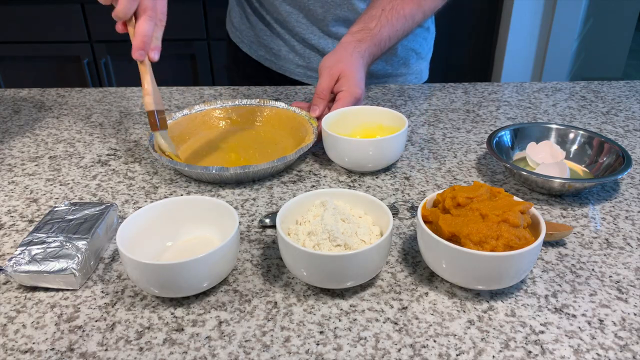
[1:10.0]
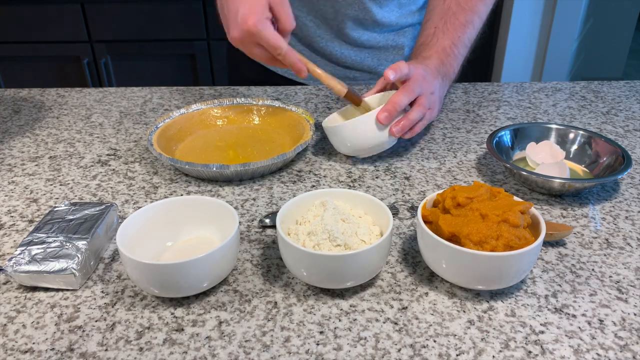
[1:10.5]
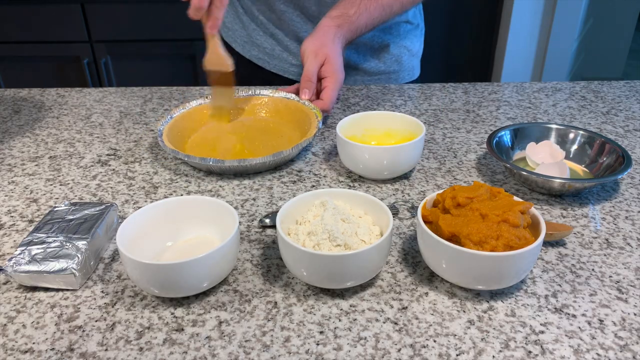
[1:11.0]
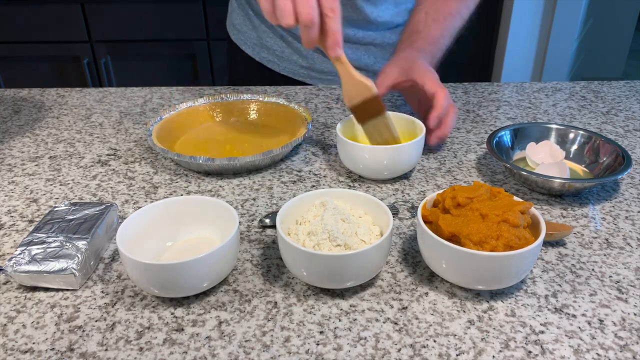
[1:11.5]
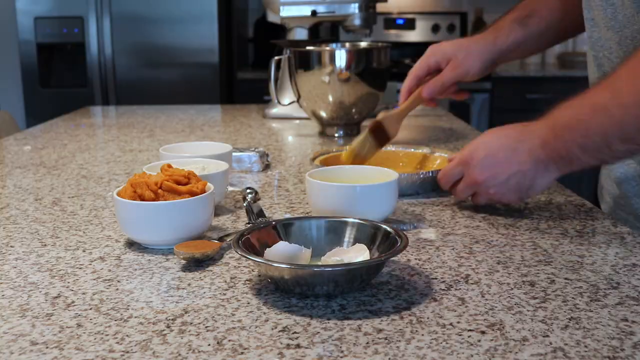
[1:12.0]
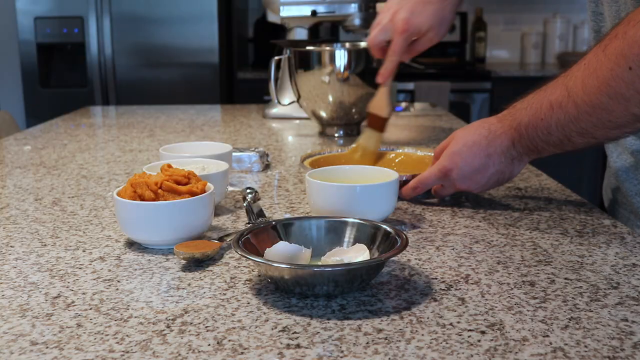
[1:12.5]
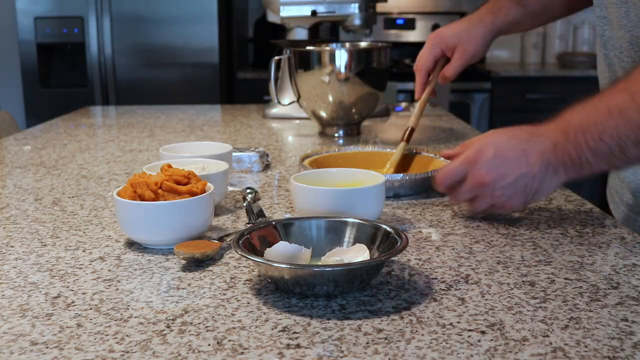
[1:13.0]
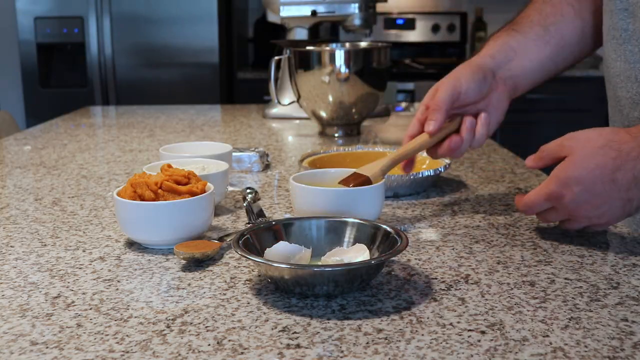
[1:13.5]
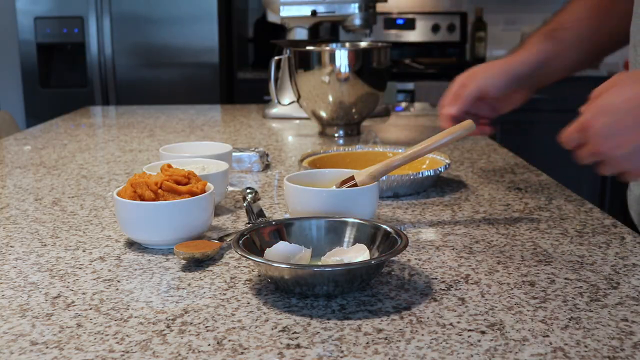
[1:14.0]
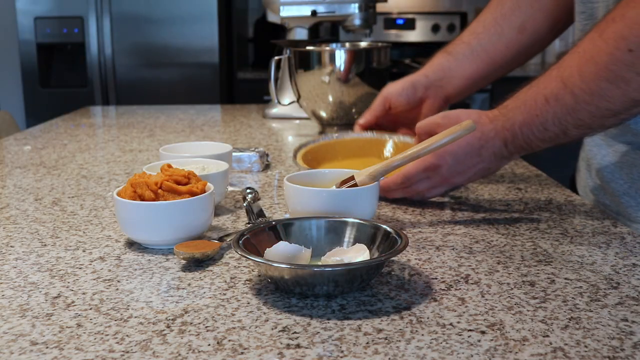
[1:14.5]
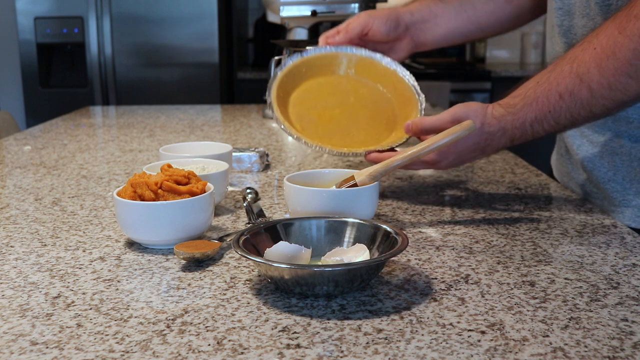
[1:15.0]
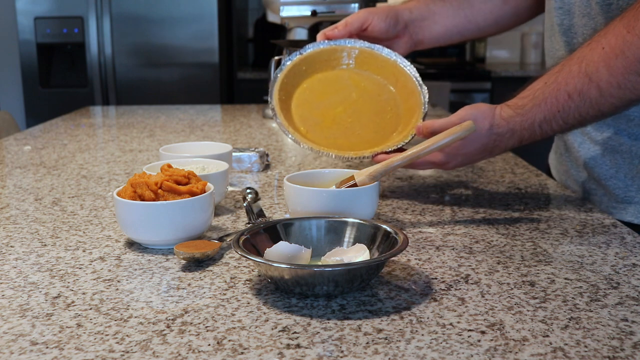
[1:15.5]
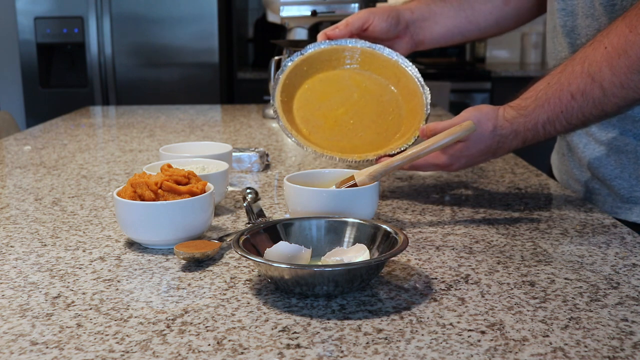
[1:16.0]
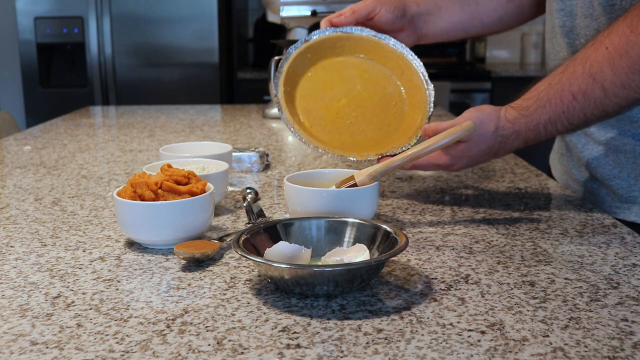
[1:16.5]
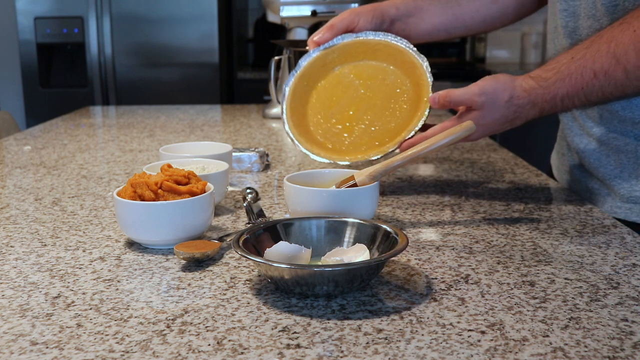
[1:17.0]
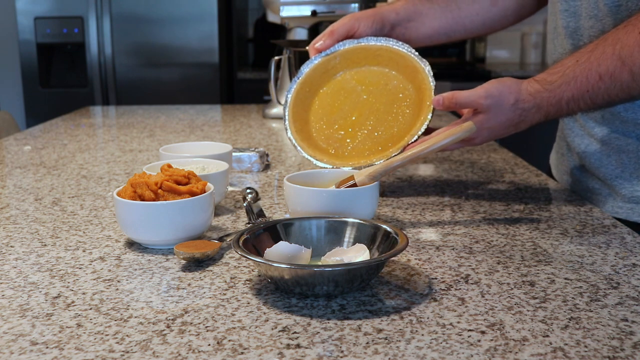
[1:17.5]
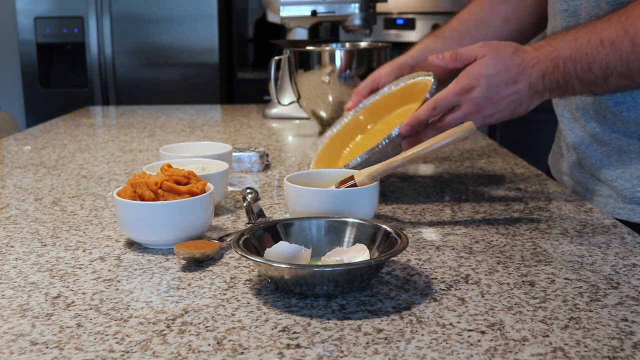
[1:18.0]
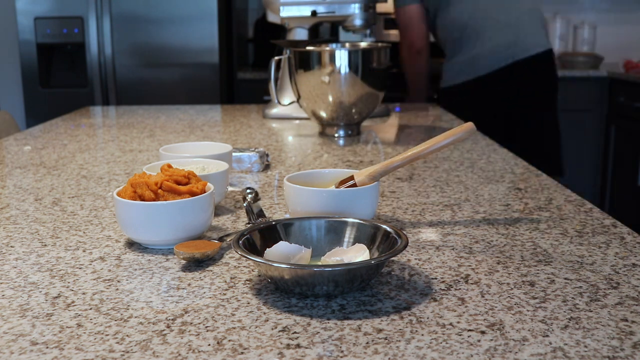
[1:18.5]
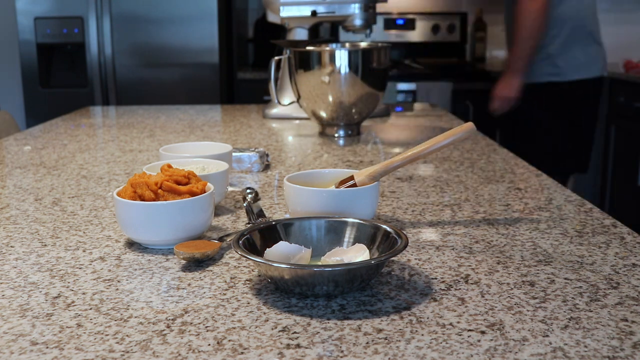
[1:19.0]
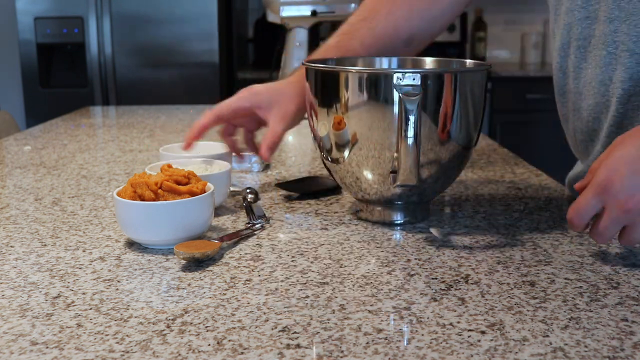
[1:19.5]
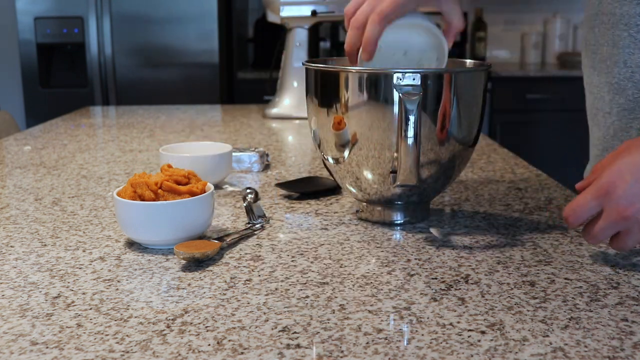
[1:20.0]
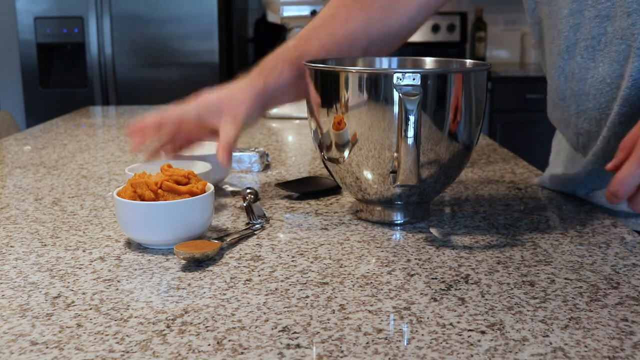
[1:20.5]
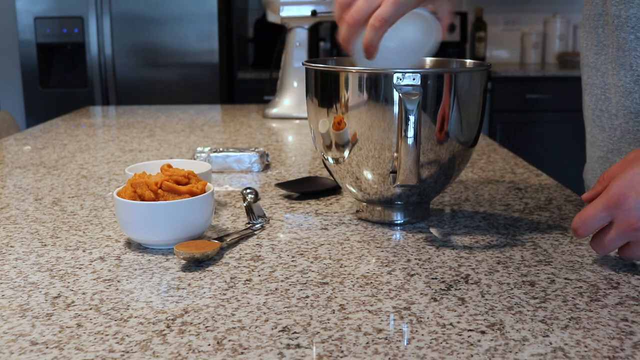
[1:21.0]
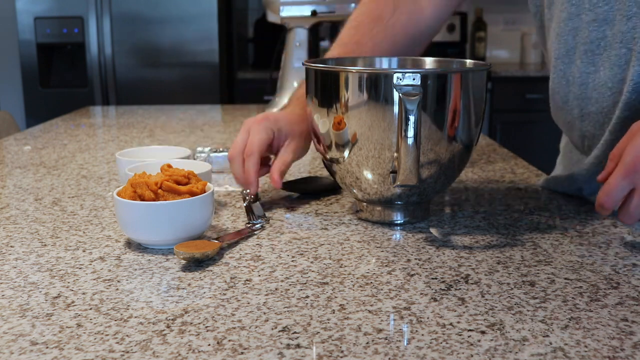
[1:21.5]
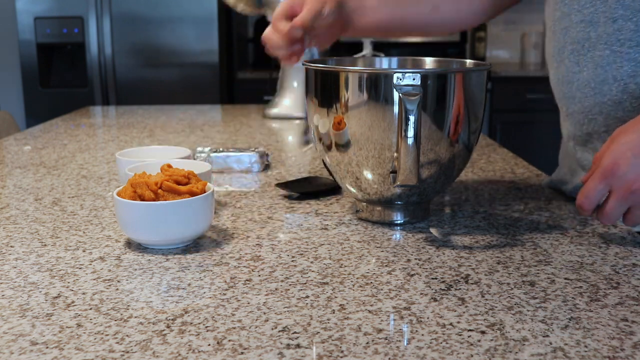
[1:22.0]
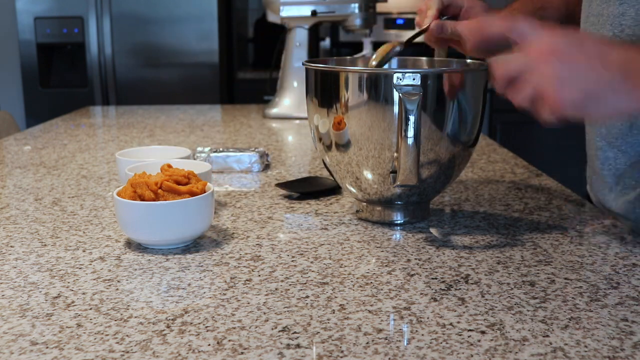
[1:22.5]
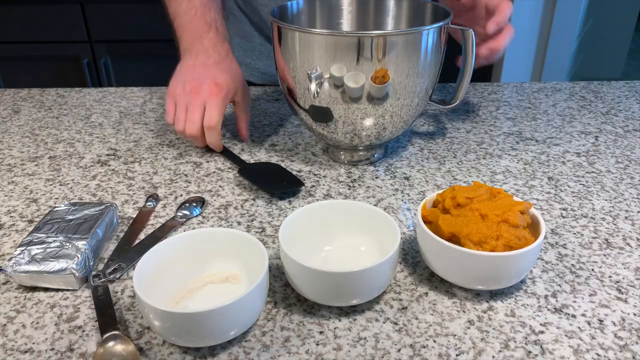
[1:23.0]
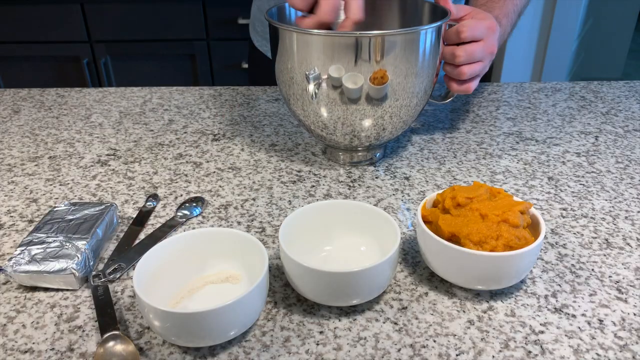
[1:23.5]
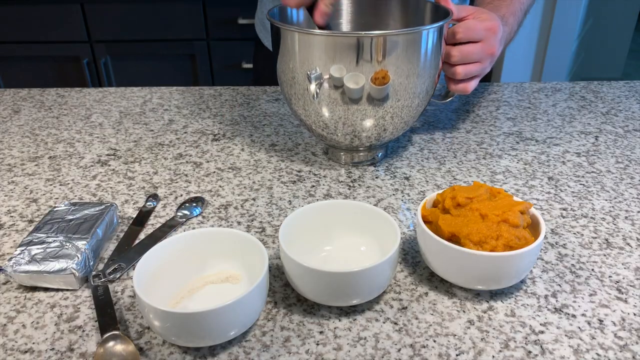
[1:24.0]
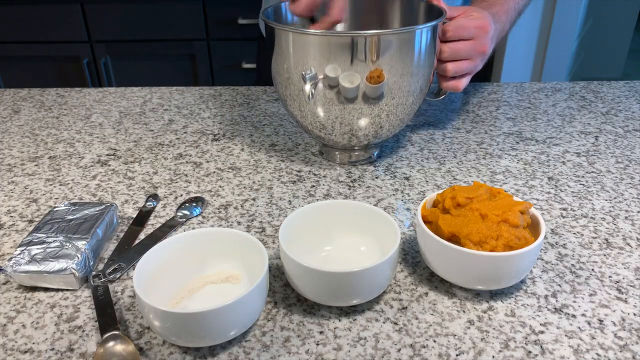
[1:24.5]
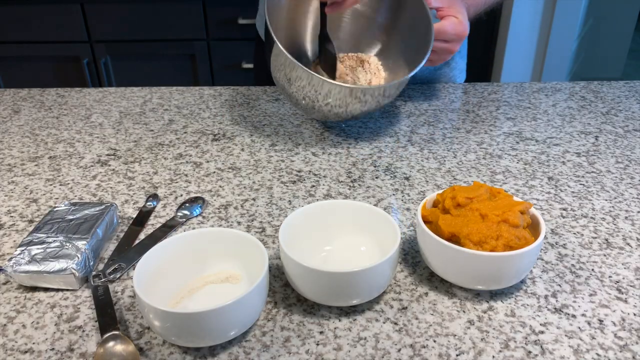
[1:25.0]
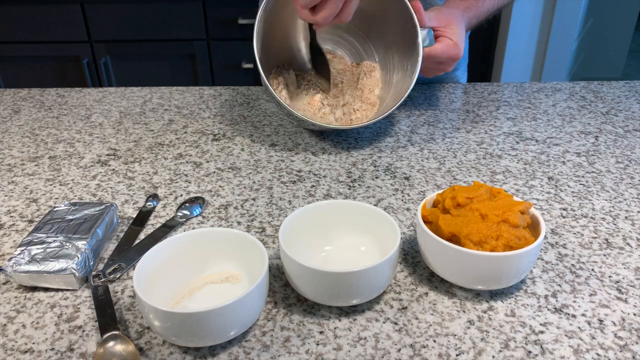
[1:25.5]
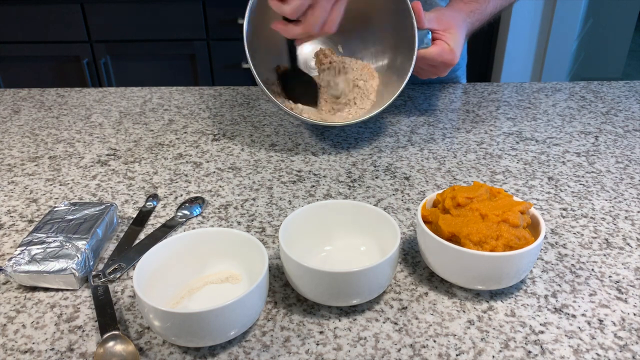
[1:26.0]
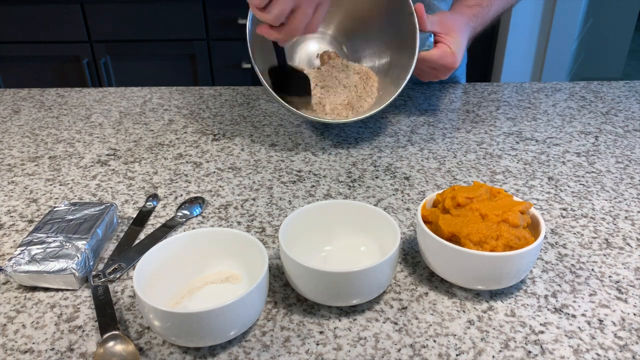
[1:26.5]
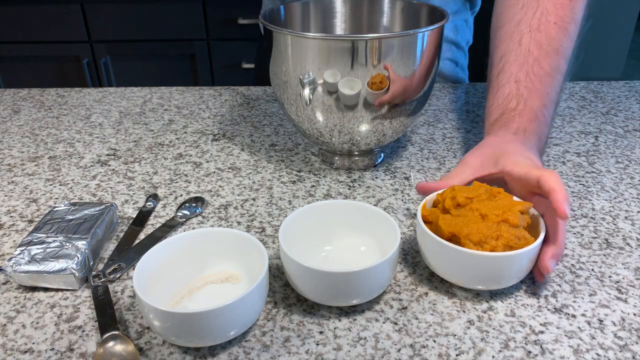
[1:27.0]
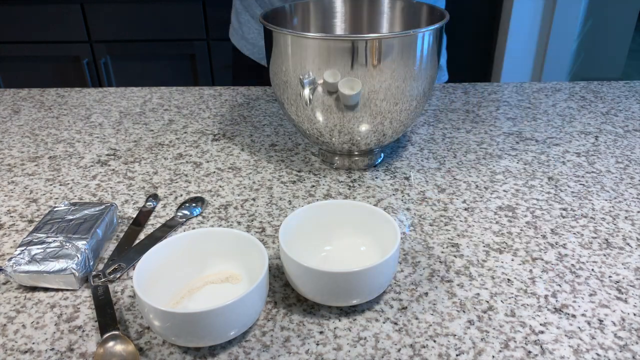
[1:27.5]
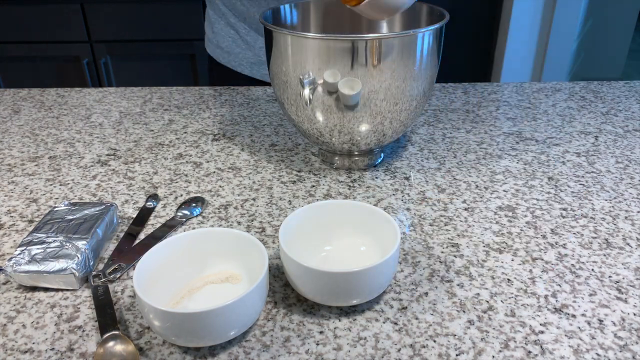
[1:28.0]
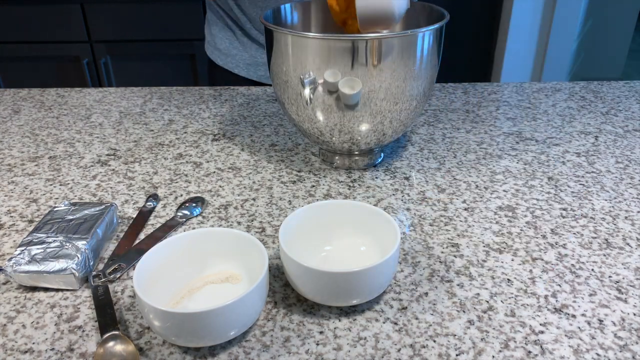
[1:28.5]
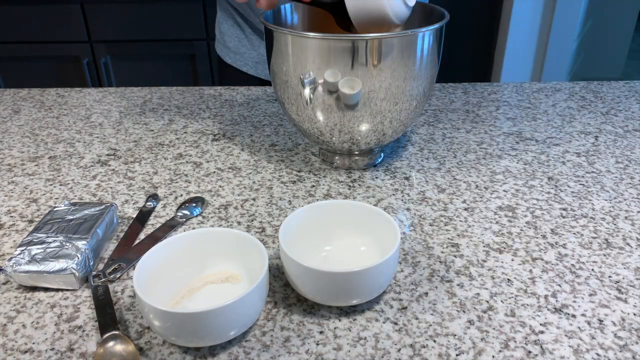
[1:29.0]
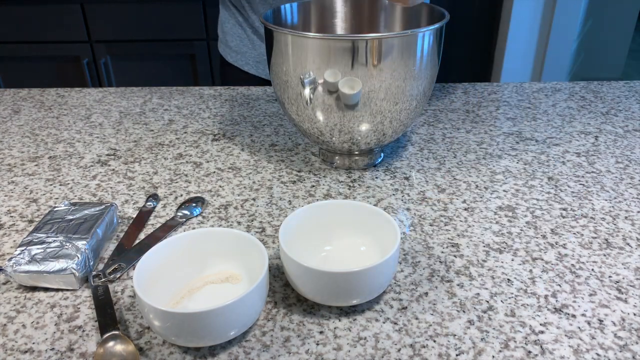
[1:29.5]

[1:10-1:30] In the kitchen, the countertop holds butter and four white bowls. One contains something like flour or another white substance; another is the bowl where the egg was broken and poured, with the shells left in it and the egg white inside; another white bowl is where the yolk was placed and whipped, and the result has been scooped into a silver bowl. The man is still applying the yolk, then shows it to the camera; the coated bowl looks yellowish from the yolk. It is then taken to what is apparently an oven. The man pours the flour or white substance from the white bowl into the bigger silver bowl, pours all of the mixture in, takes another spoon and mixes thoroughly, then pours in a brownish mixture and mixes it.